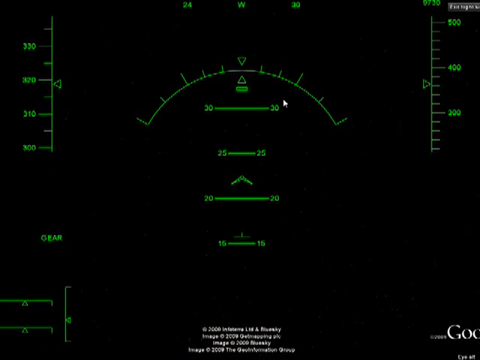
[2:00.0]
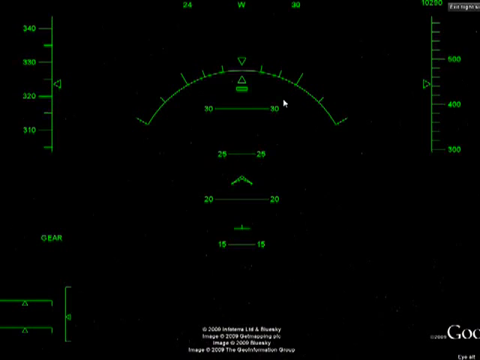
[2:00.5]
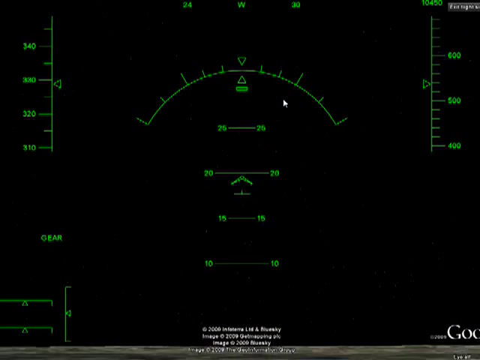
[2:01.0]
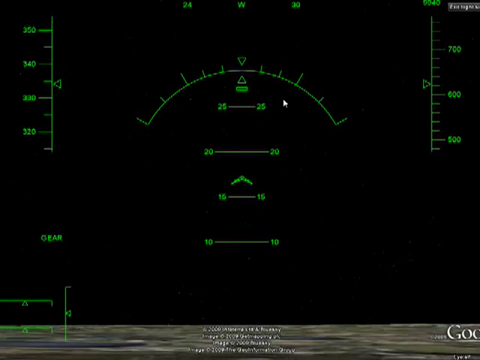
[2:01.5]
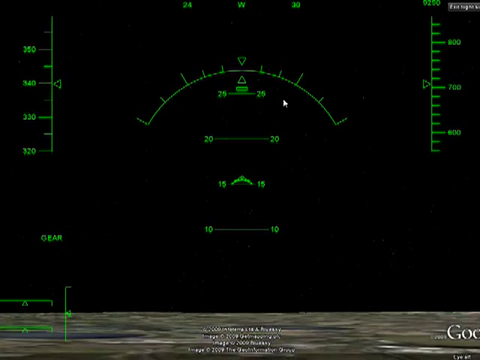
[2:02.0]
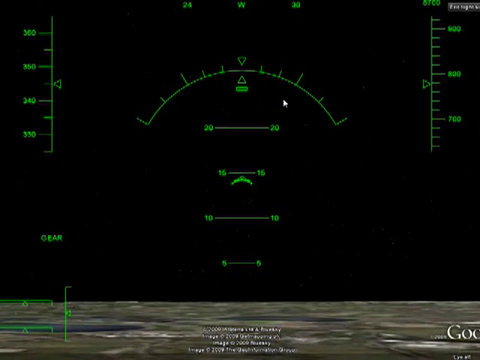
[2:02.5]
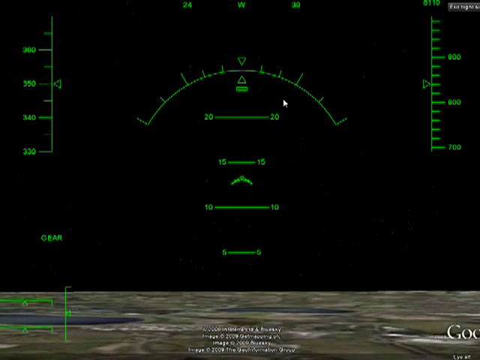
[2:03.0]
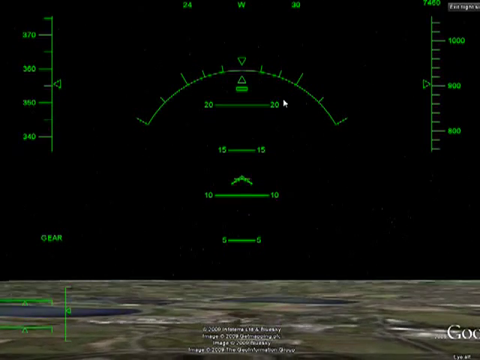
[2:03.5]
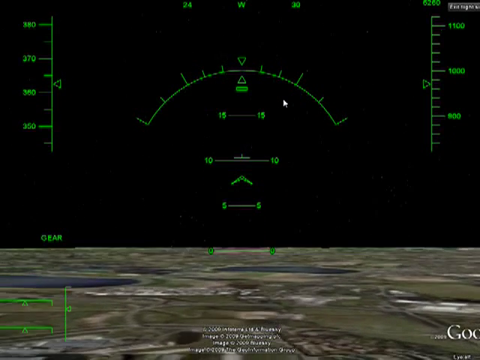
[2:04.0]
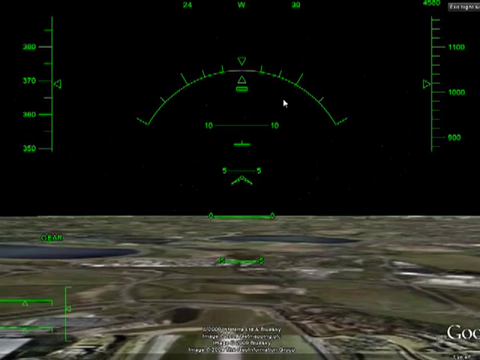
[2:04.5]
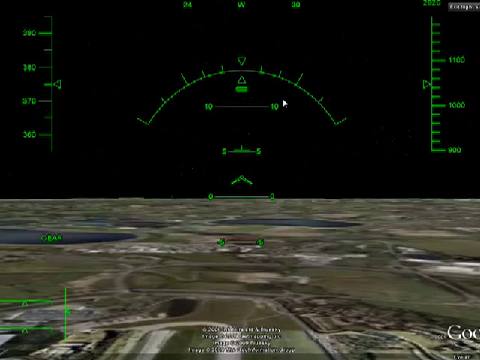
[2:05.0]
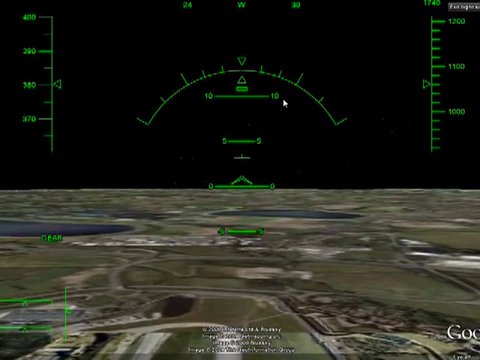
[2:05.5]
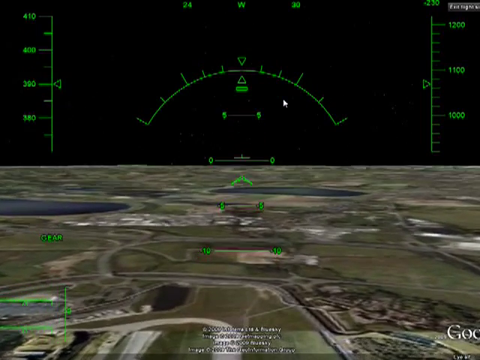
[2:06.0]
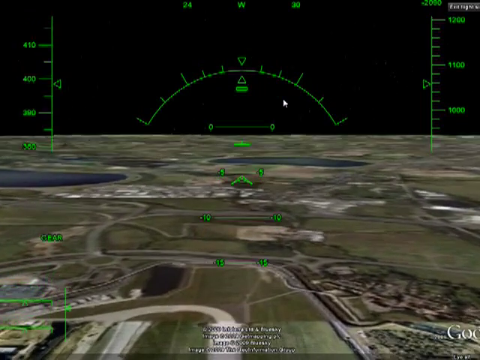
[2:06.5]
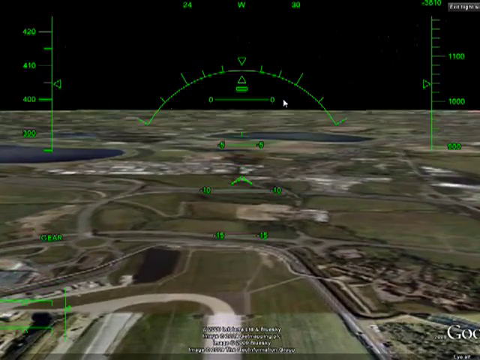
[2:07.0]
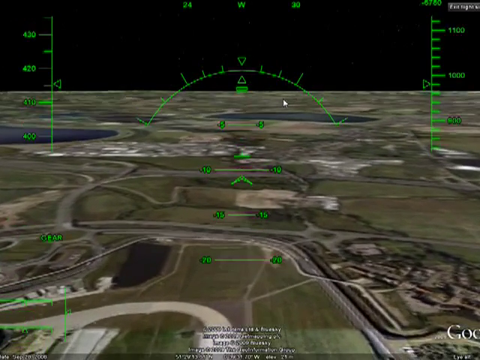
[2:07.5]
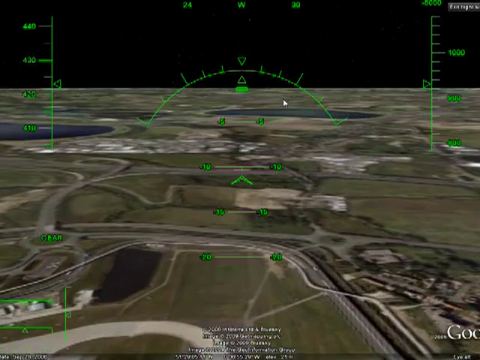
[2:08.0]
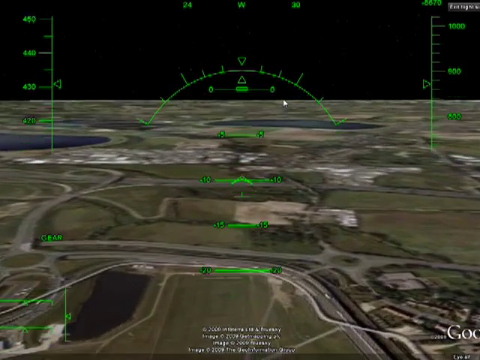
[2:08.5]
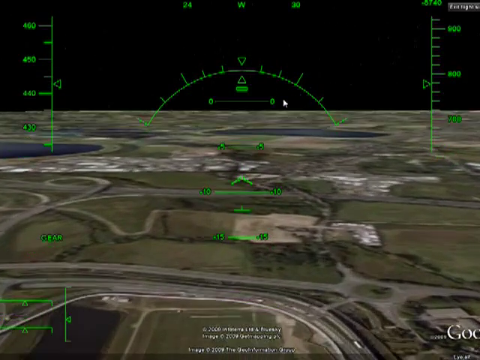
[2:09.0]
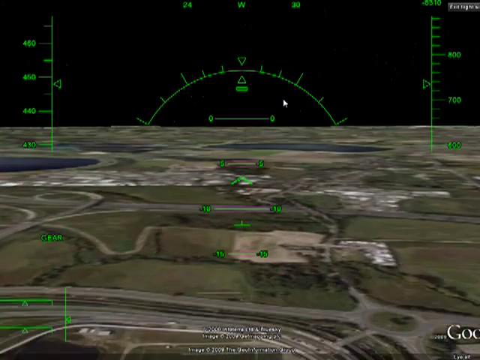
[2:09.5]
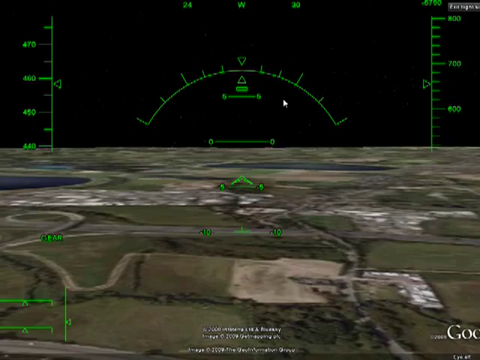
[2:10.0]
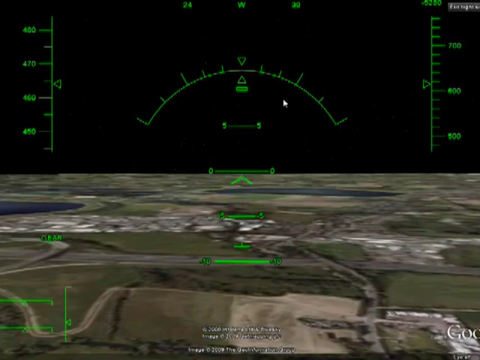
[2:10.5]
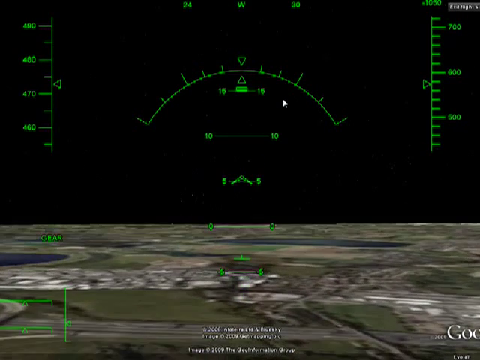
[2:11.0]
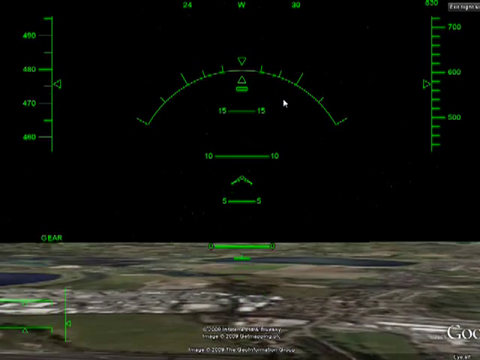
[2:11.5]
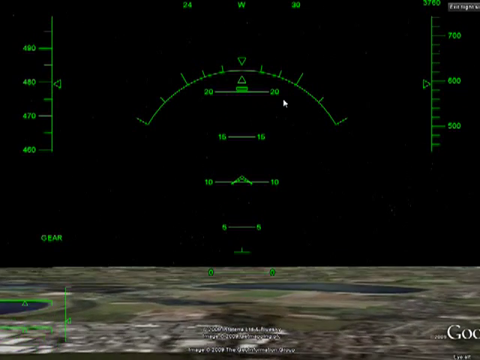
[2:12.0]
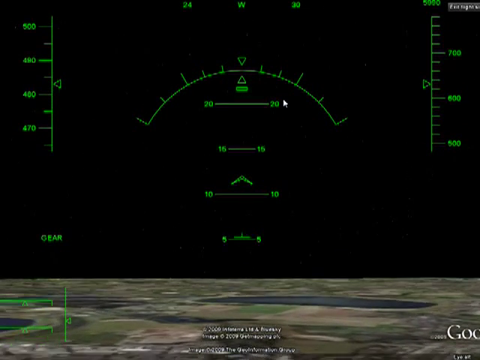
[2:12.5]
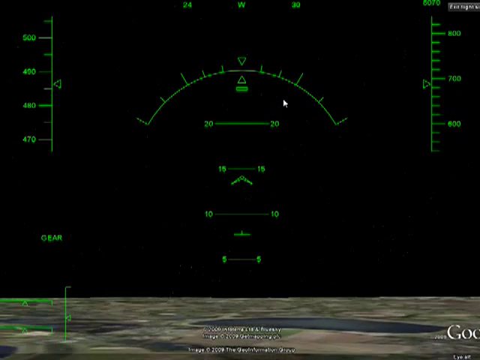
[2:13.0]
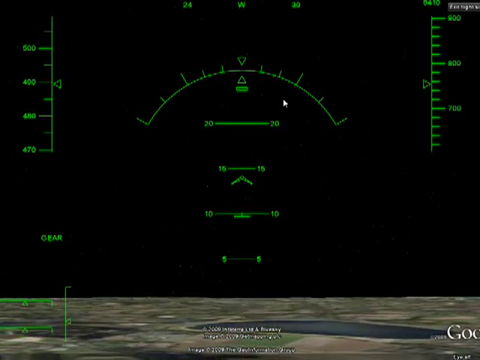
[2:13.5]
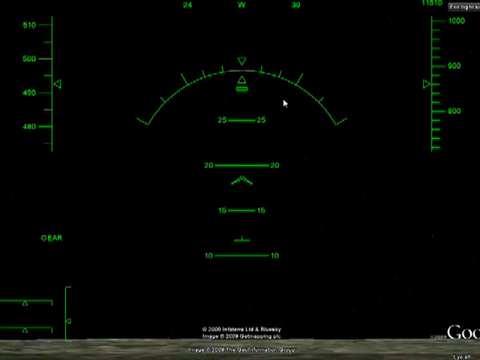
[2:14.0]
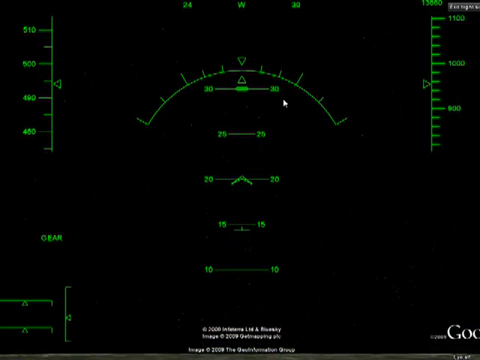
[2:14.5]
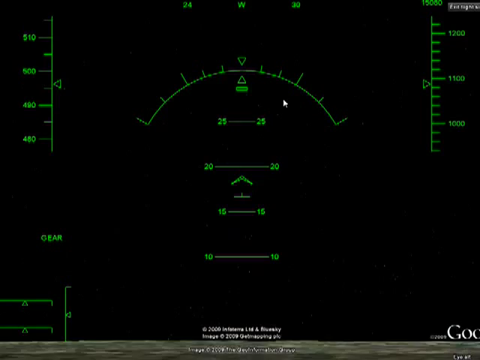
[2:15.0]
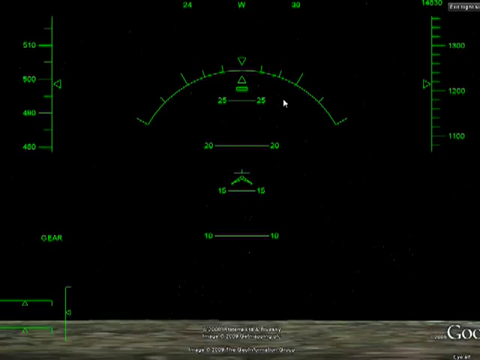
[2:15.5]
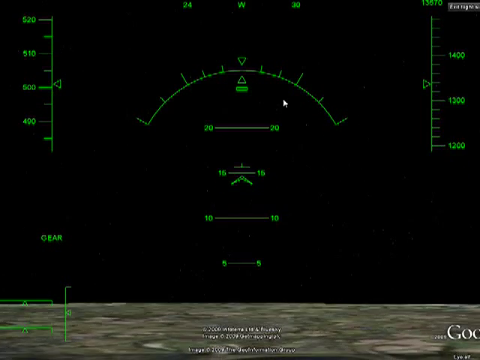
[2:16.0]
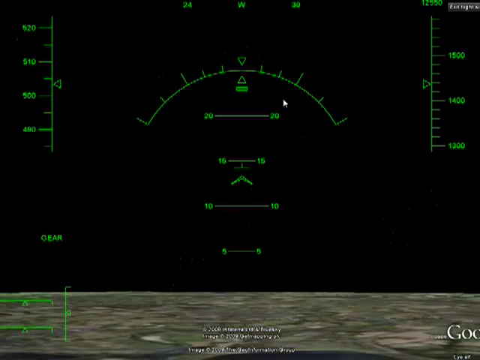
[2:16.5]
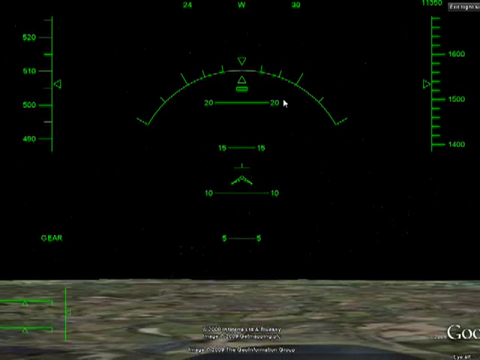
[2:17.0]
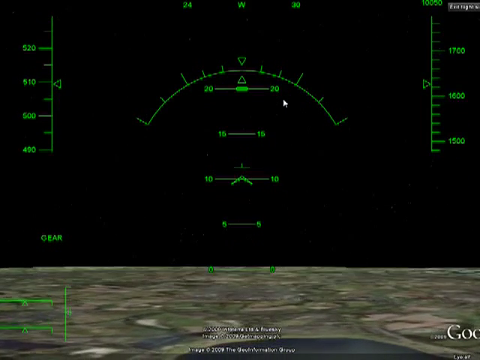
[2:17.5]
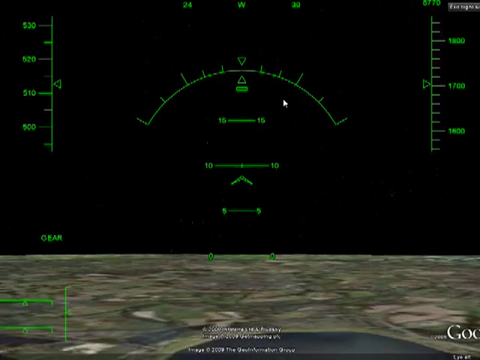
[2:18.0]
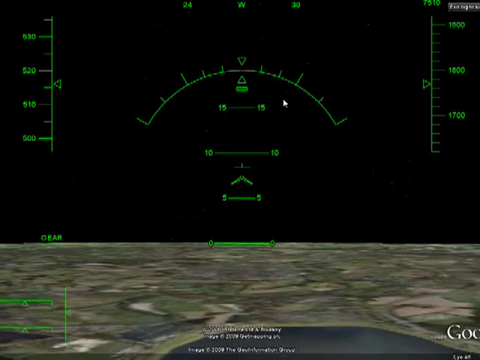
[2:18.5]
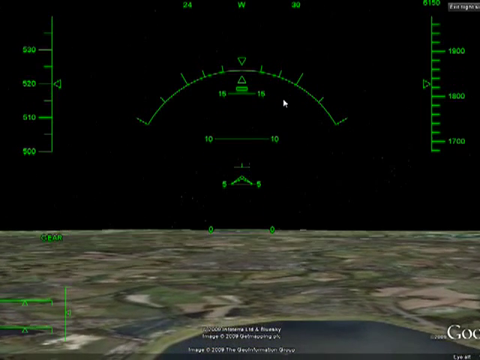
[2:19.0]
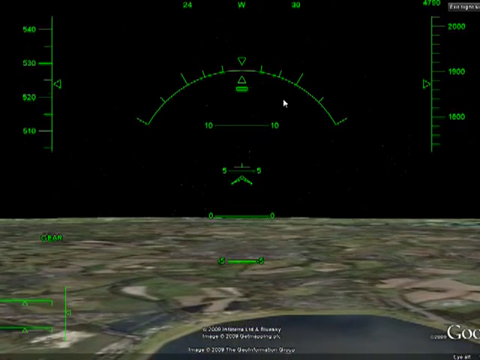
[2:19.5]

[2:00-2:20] The plane continues to accelerate, reaching 400 on the speed indicator. It then starts to tilt down toward the Earth, and pixelated fields, towns, roads and houses become visible. The land has no depth; it is entirely a flat image of satellite imagery. On the right-hand side appears to be the altitude, which starts halfway between 300 and 400 and keeps rising to 1900, presumably in feet.